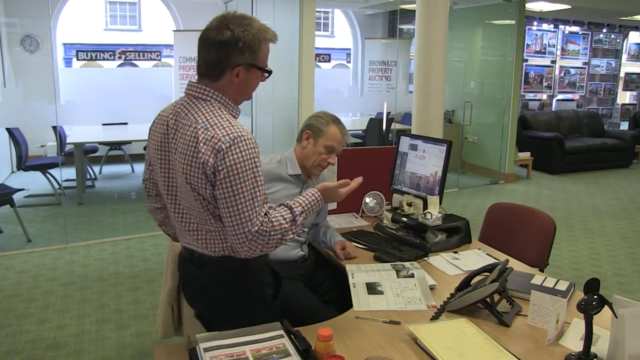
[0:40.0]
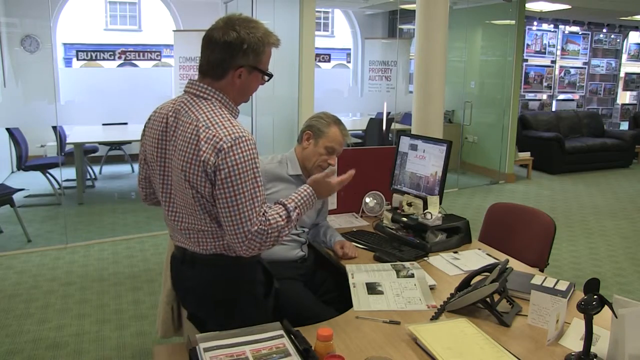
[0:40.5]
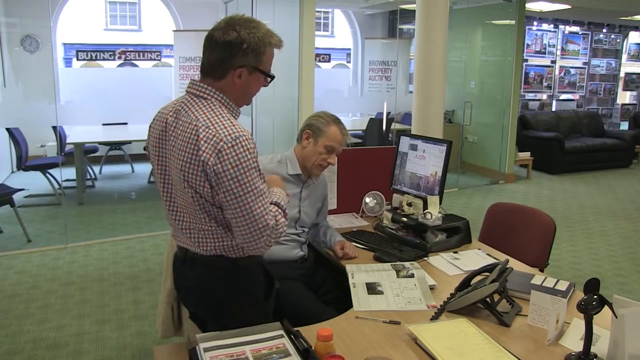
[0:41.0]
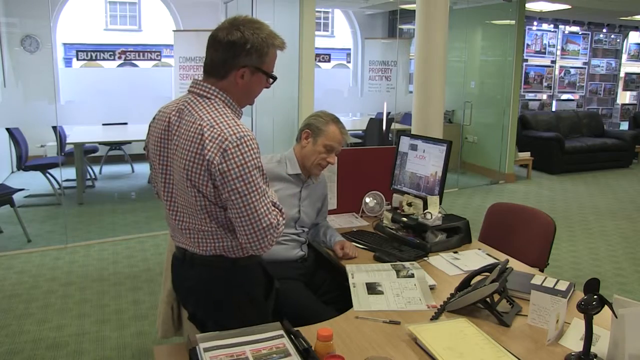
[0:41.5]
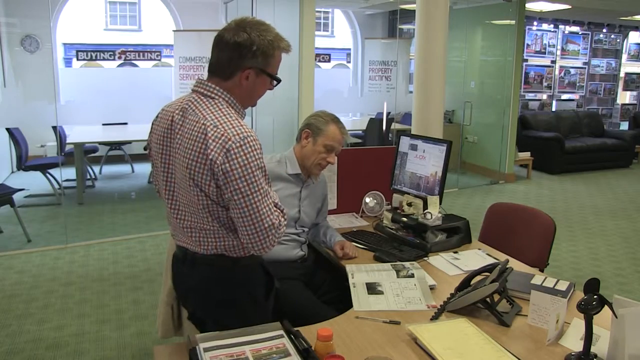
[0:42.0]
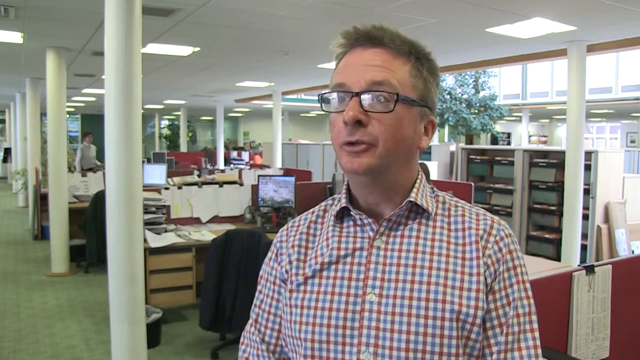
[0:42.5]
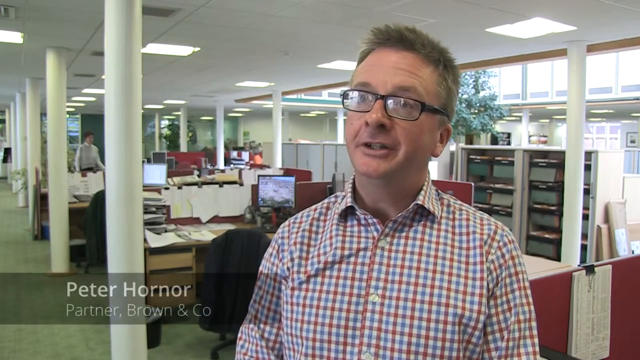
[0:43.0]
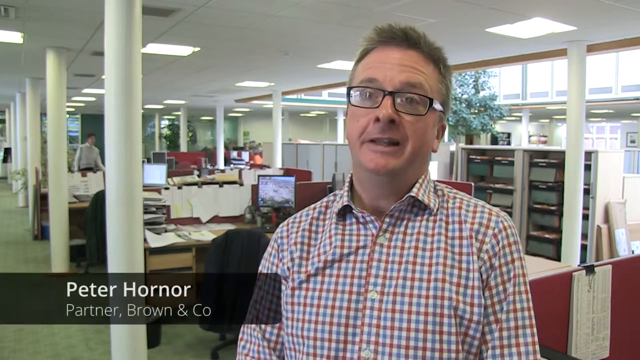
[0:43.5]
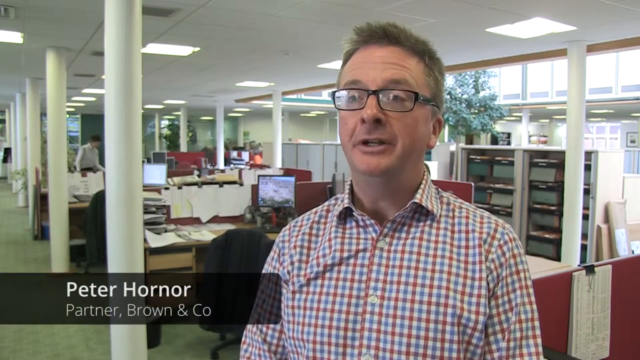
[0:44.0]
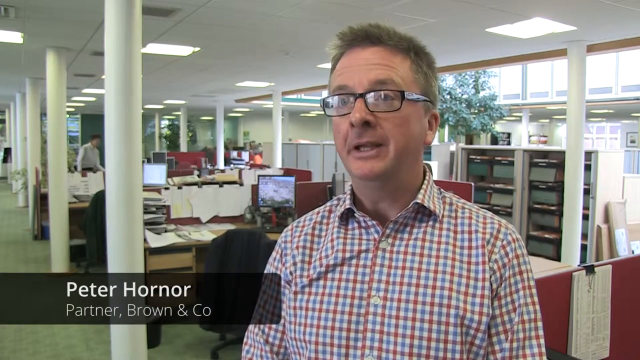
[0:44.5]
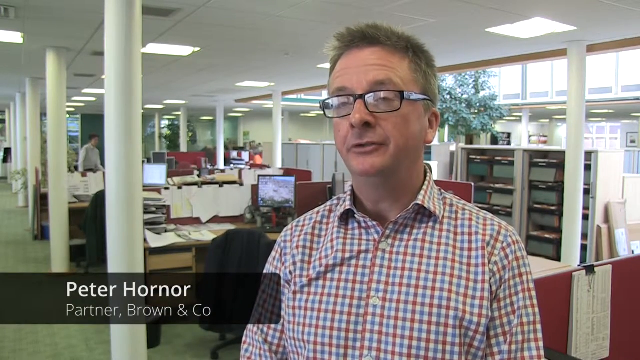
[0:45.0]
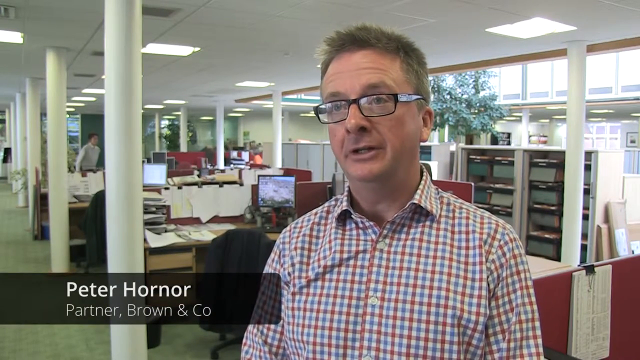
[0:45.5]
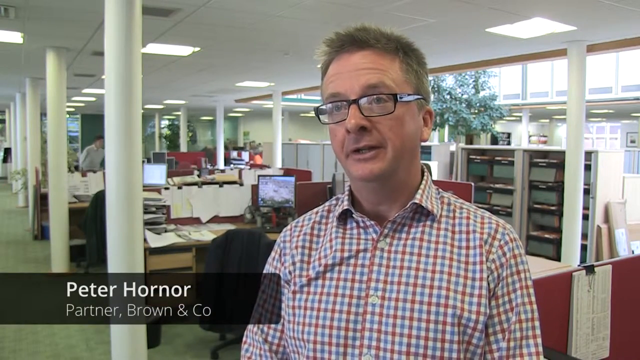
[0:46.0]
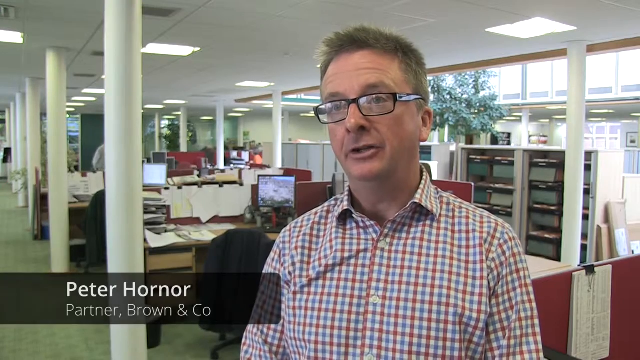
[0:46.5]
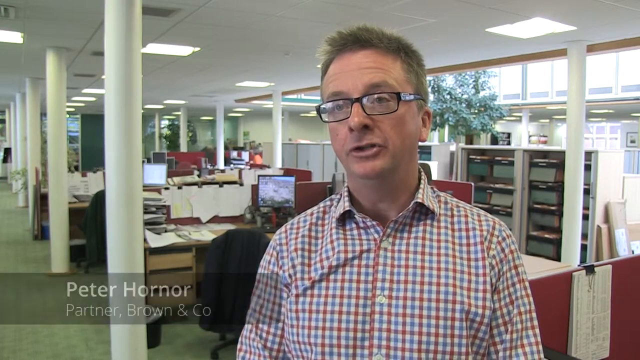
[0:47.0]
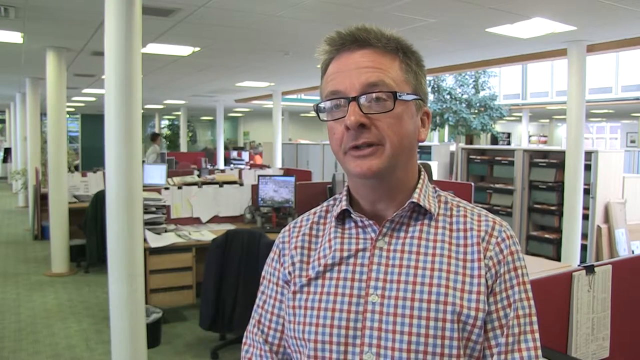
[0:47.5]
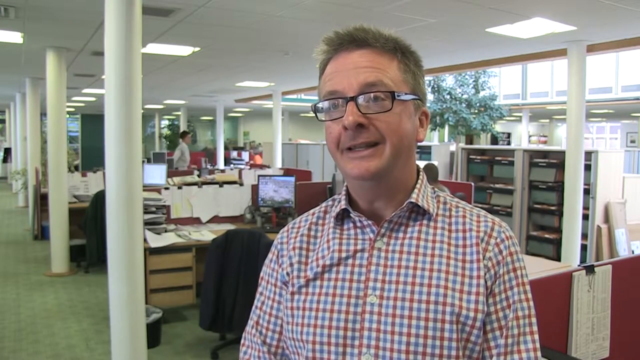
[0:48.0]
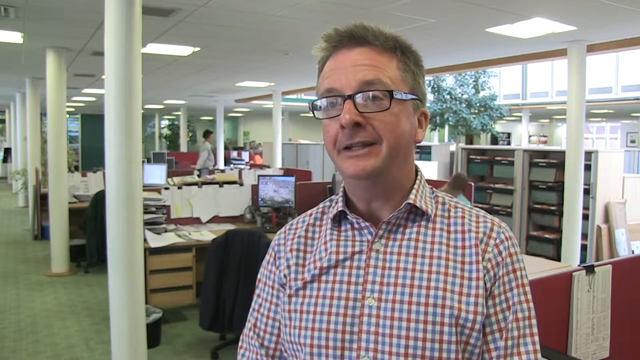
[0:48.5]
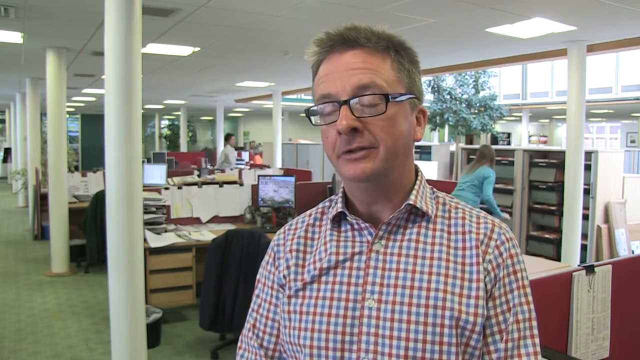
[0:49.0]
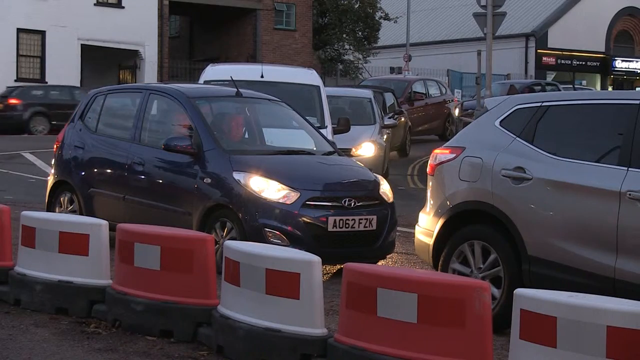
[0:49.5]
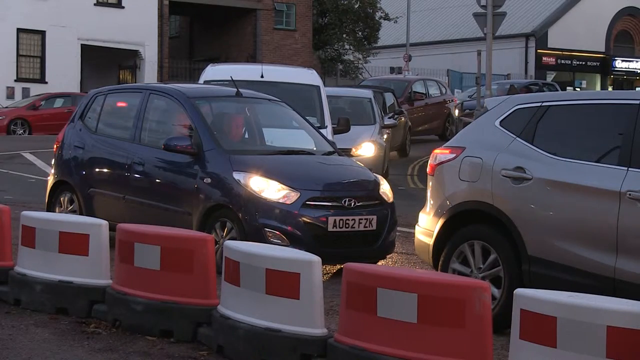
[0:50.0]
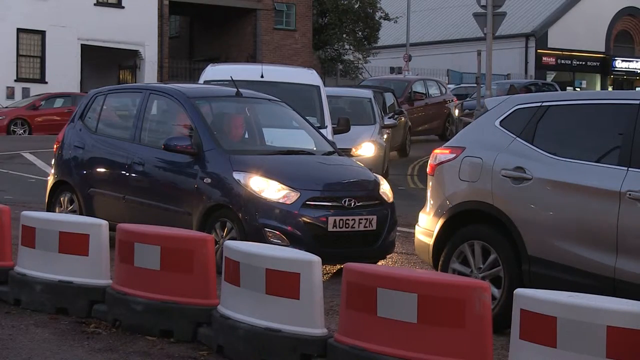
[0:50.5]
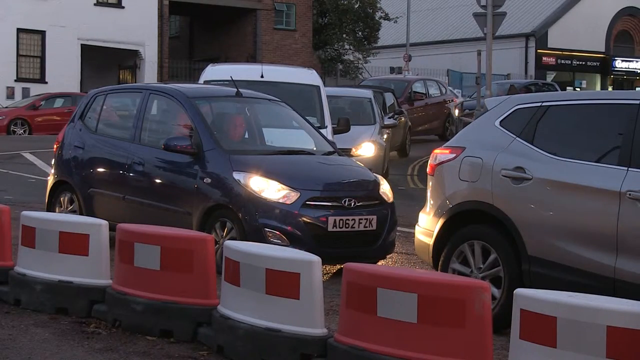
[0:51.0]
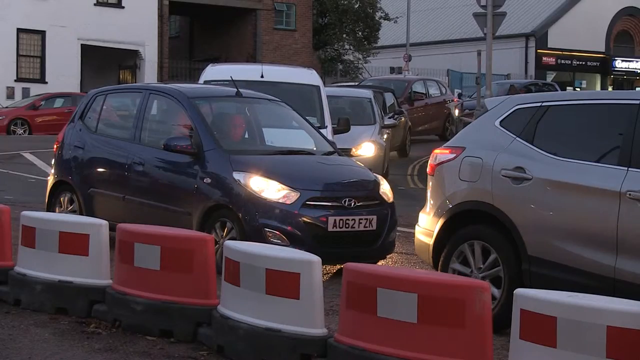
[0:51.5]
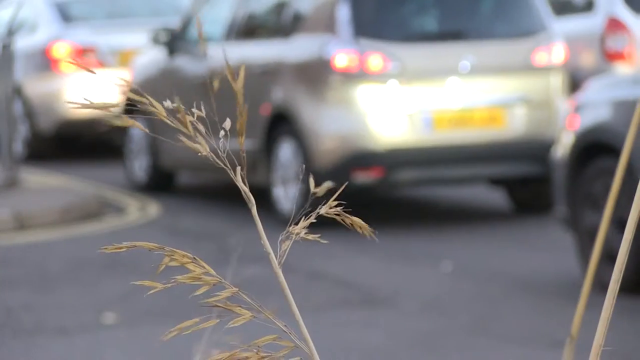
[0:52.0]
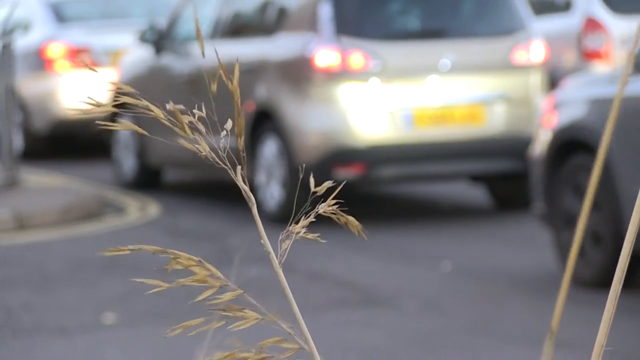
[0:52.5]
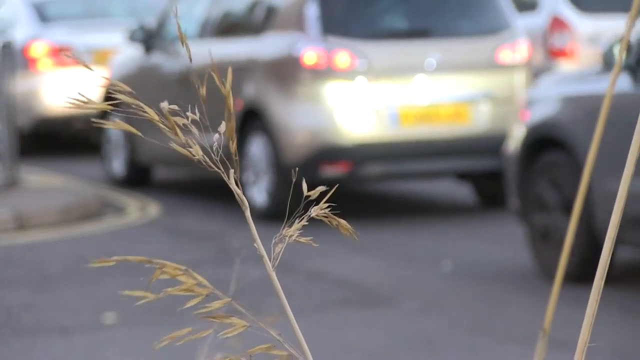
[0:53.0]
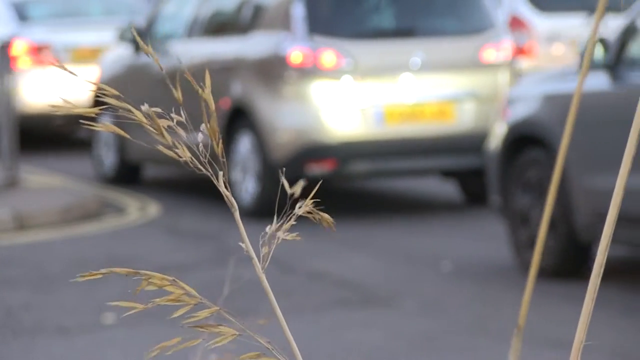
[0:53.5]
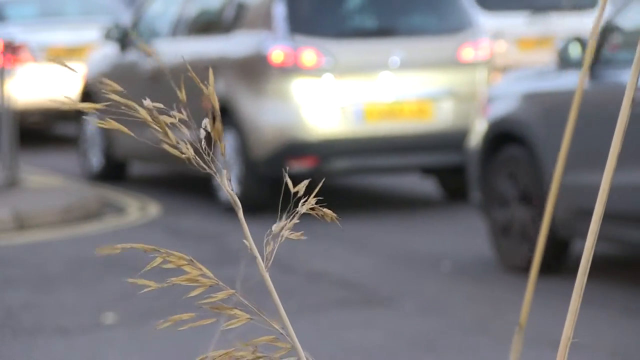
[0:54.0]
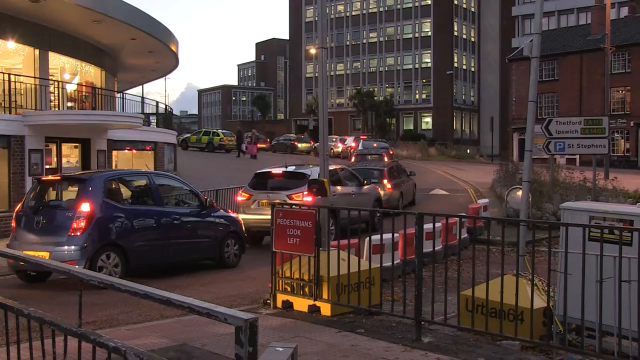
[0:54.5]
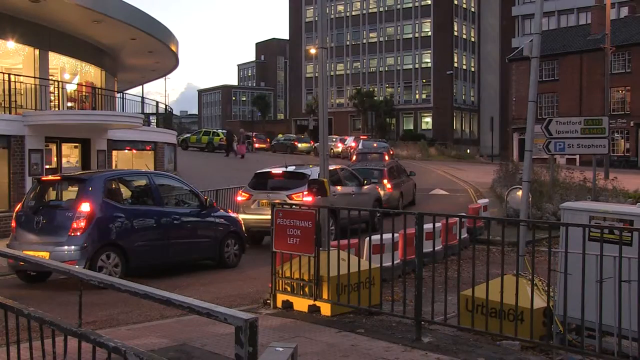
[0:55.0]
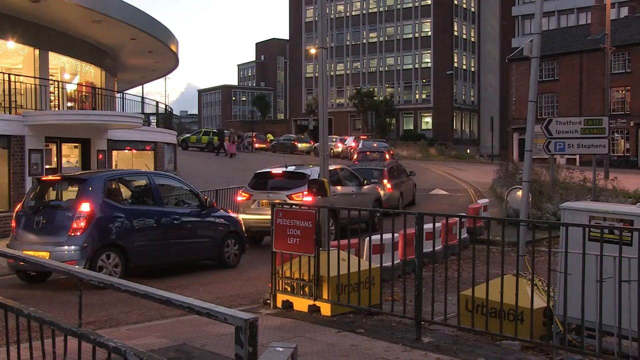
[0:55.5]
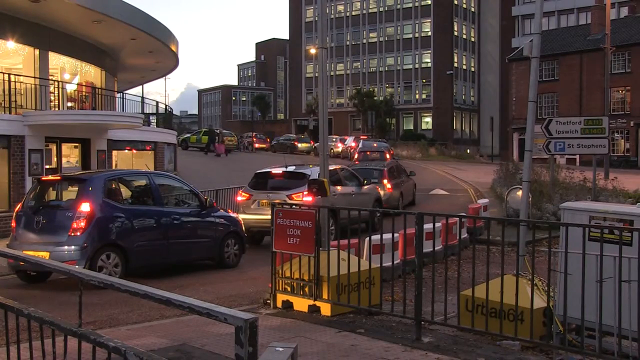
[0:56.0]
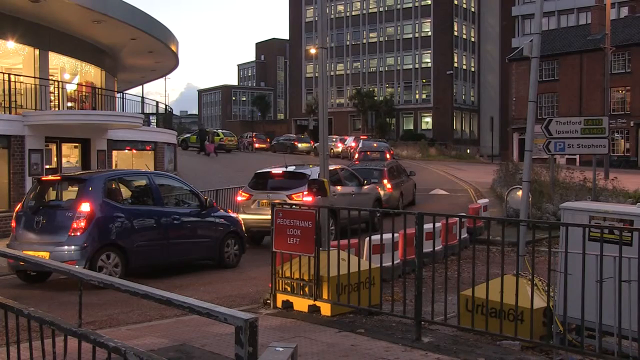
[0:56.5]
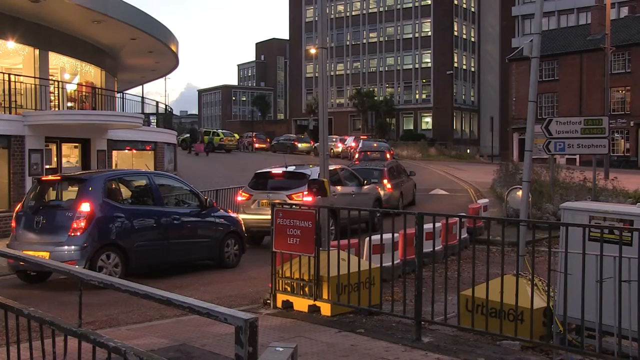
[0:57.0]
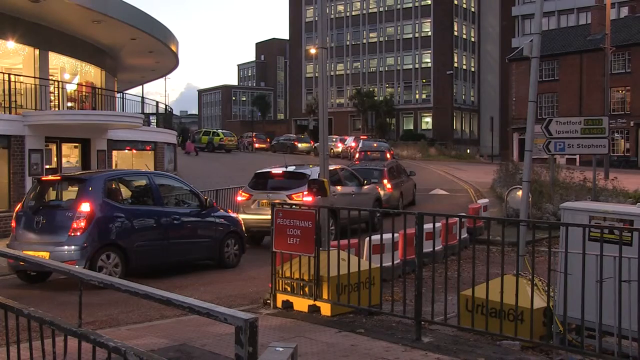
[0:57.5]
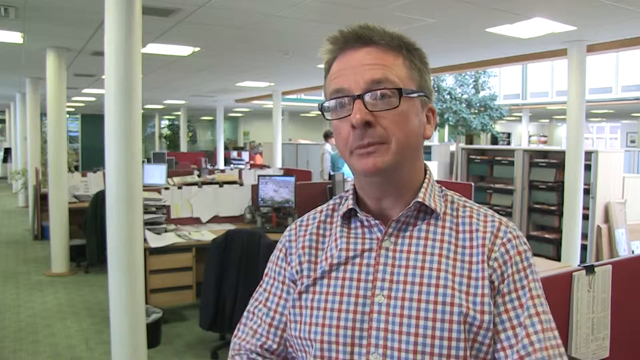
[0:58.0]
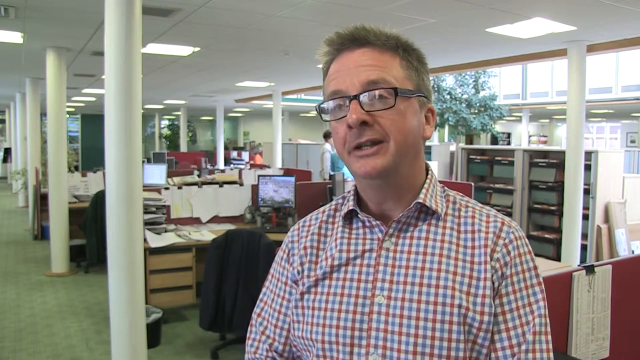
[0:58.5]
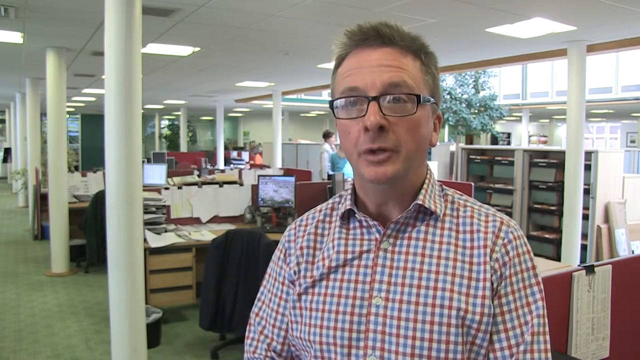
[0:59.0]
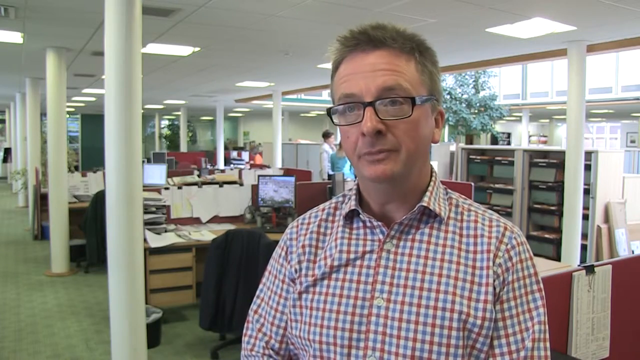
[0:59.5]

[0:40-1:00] The two middle-aged men continue their conversation while looking at a booklet in front of them. The man in the checked shirt, Peter Honar, is then shown closer to the camera being interviewed. The camera pans back to the convoy and traffic outside, where cars struggle to move. Another scene shows traffic backed up and trying to get into what looks like a pedestrian block, and traffic trying to navigate the congested roads. The camera returns to Peter as the interview continues; behind him is an office space with visible desks and mostly red office chairs.